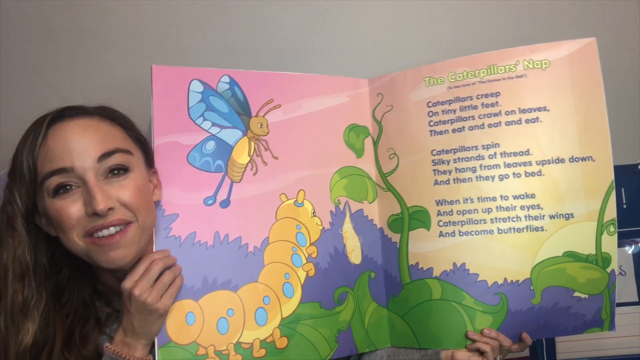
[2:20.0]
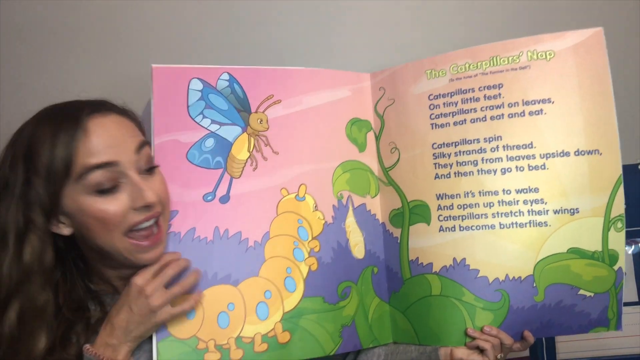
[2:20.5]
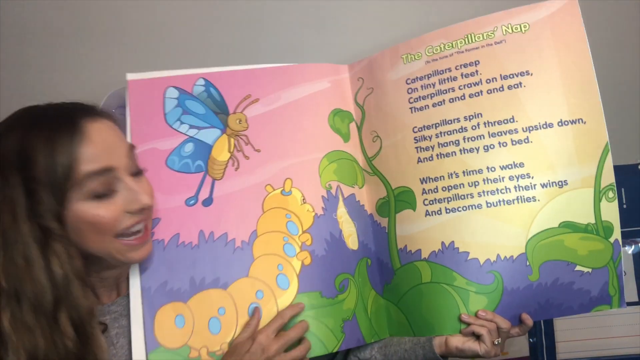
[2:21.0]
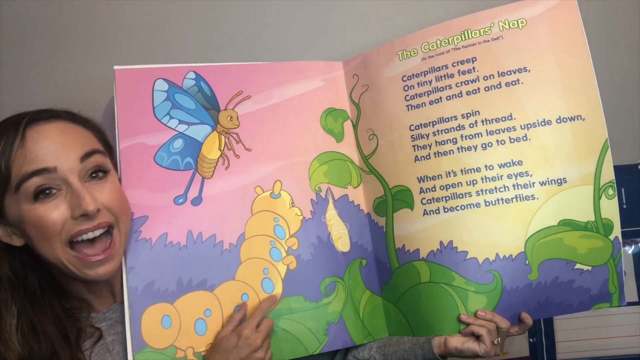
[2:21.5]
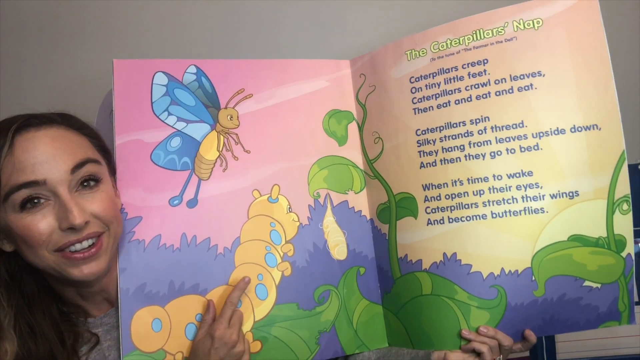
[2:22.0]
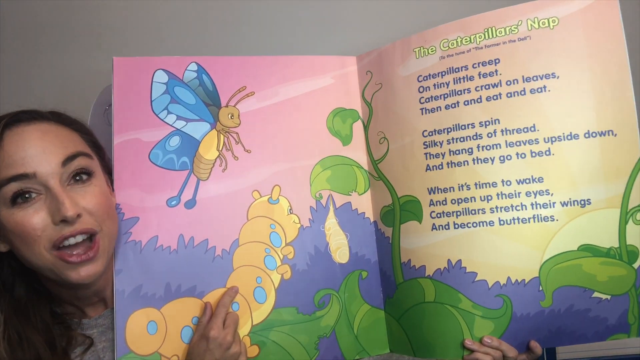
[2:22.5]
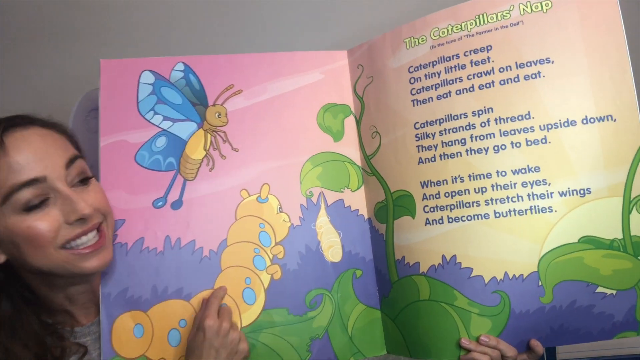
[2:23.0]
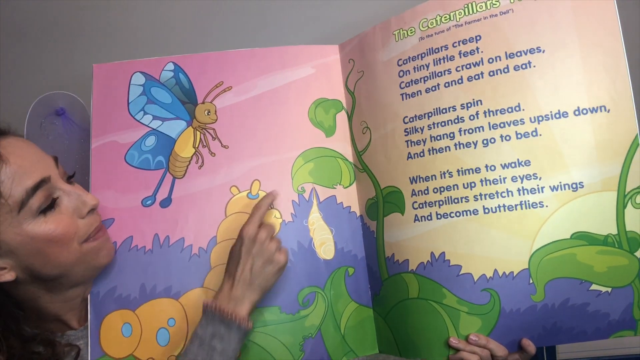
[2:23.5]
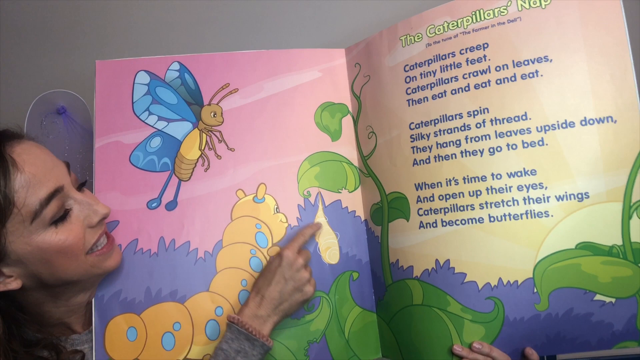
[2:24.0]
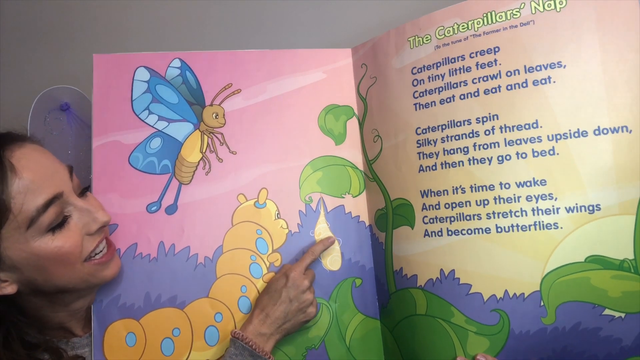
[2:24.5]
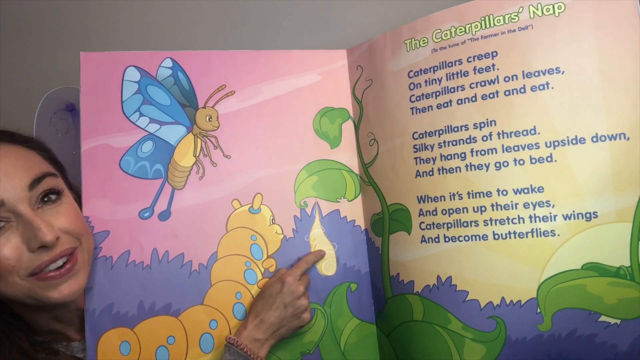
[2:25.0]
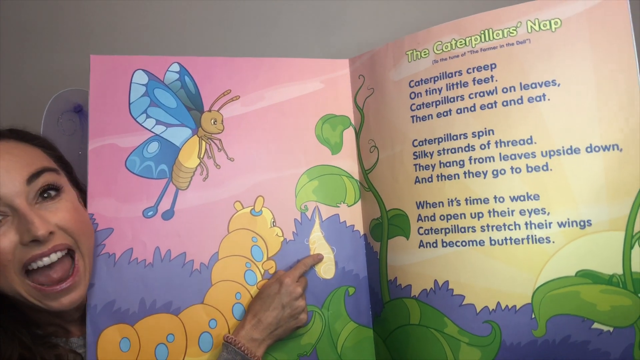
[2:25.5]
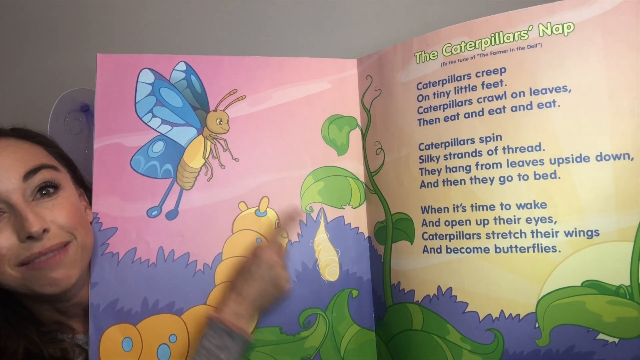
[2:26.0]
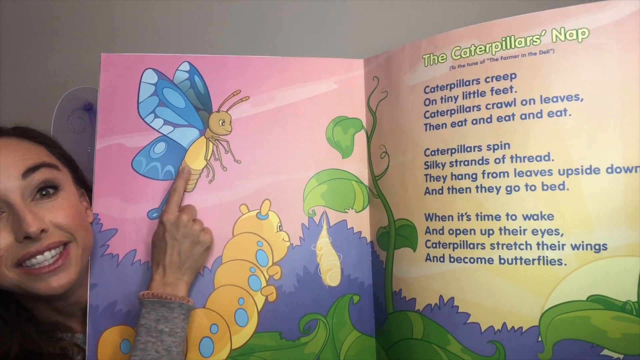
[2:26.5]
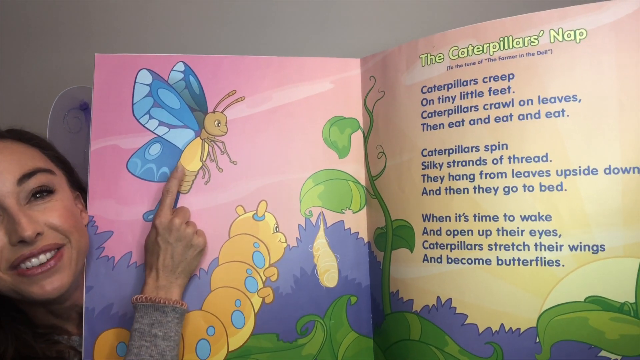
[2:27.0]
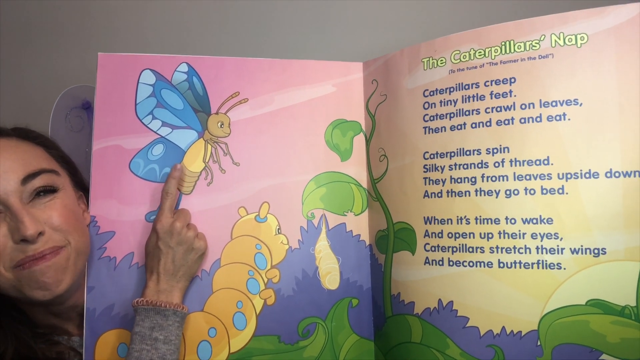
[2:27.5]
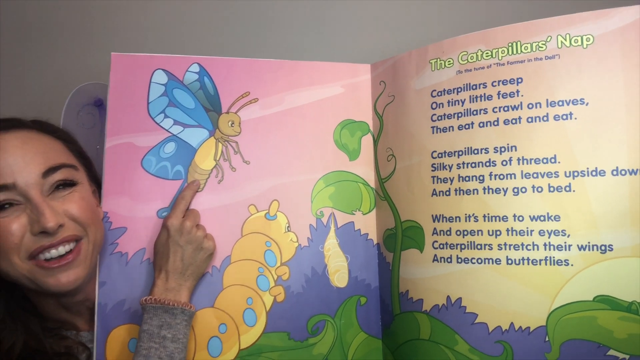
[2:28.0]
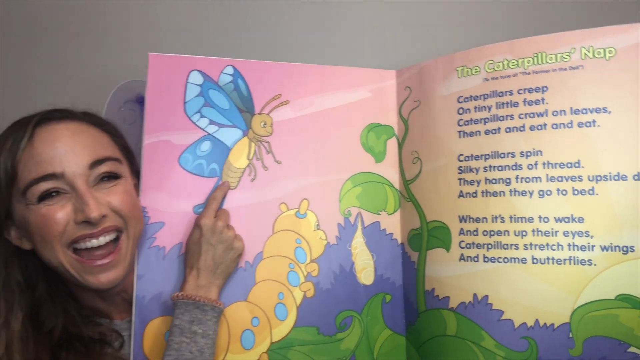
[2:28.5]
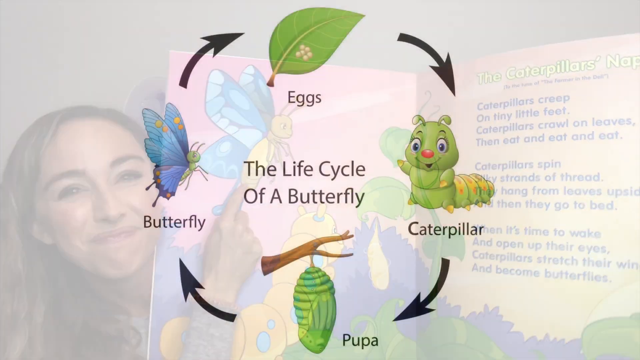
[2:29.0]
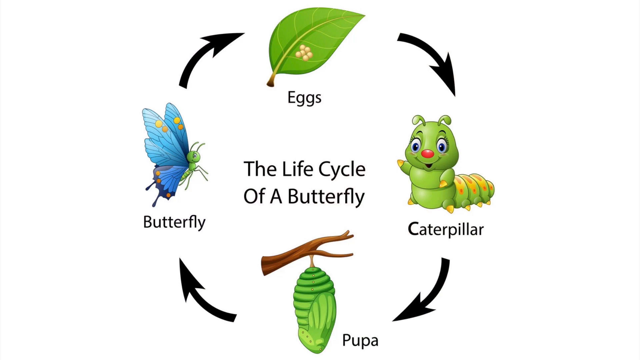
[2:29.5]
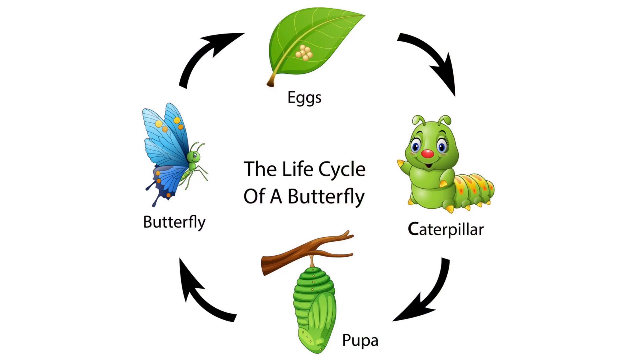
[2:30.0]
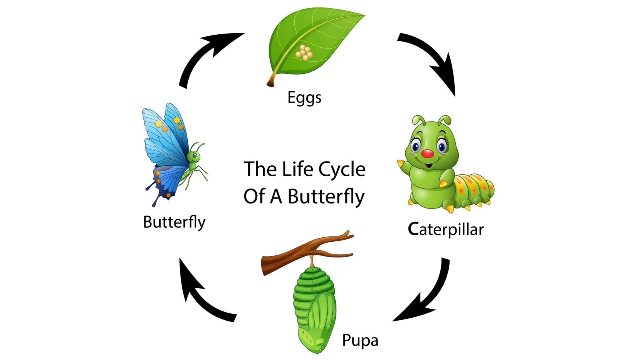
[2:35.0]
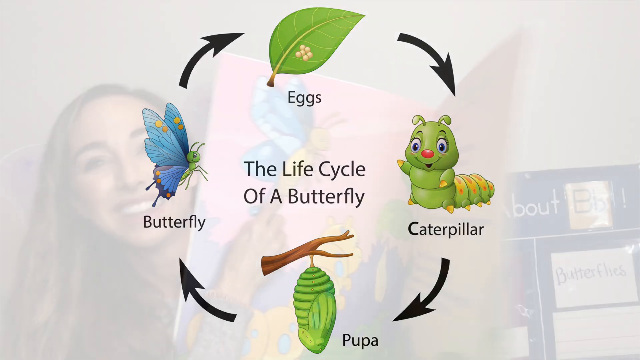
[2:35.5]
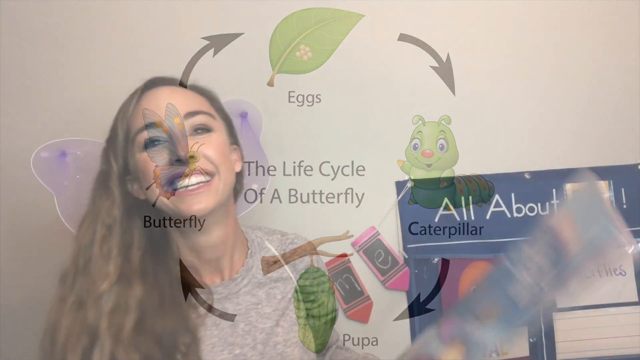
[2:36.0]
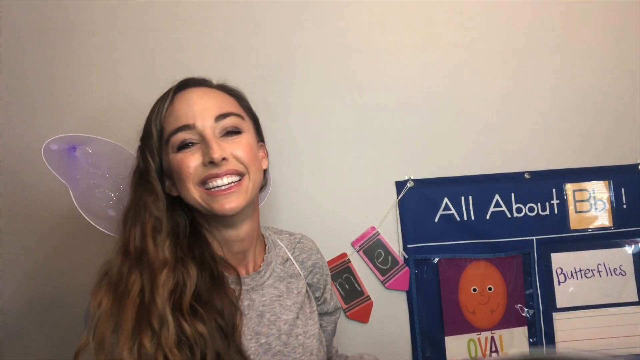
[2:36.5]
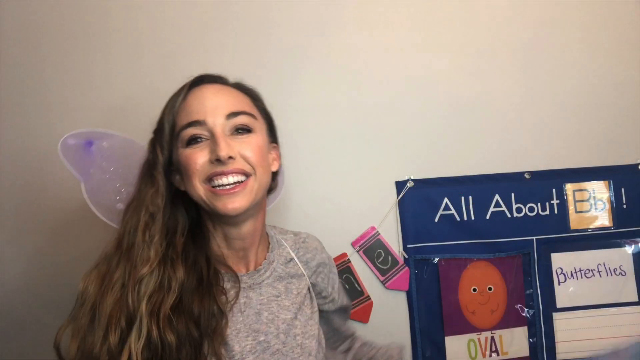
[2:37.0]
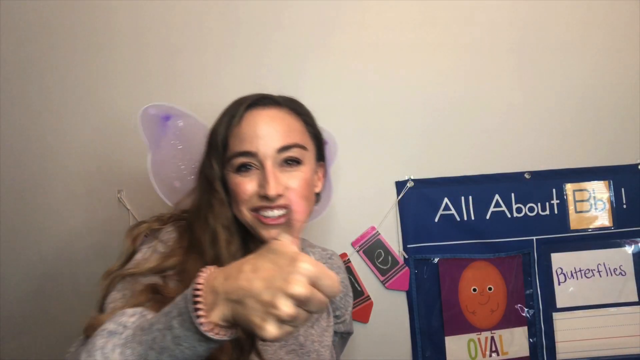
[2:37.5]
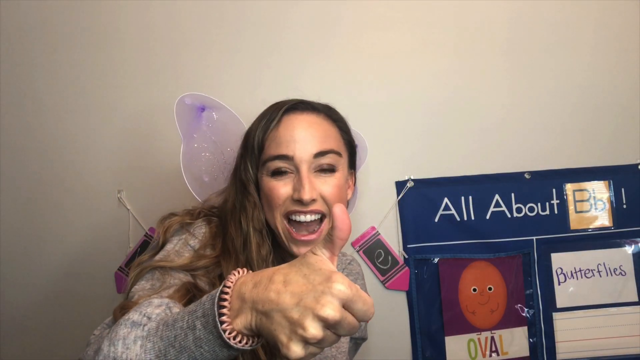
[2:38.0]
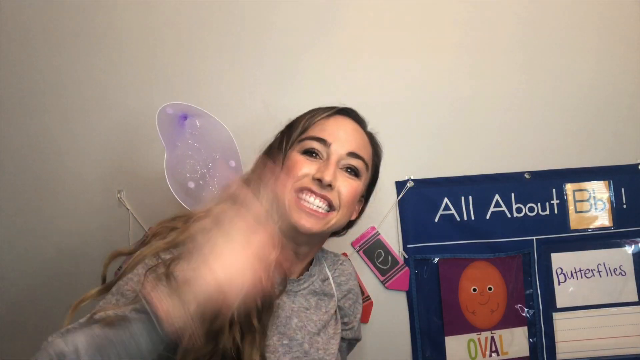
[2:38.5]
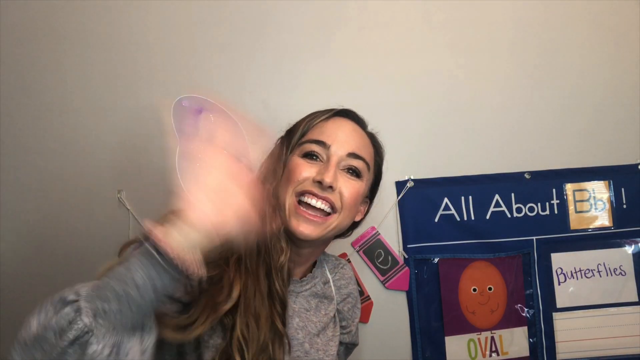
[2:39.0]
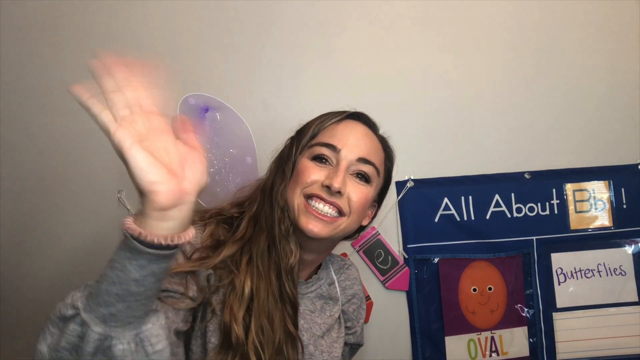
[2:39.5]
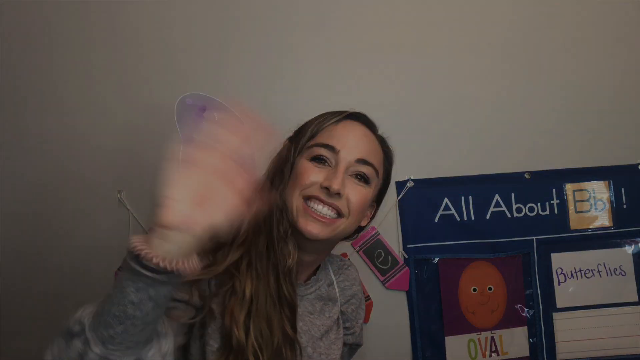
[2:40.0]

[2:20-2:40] She points out the different parts of the image again, apparently having been speaking the whole time. The view then changes to another image showing the life cycle of a butterfly: eggs on a leaf, an arrow to a weird-looking caterpillar, then to a pupa, another arrow to a blue butterfly with a green body, and then back to eggs. The video then returns to the woman, who gives a thumbs up and waves at the camera before the picture fades to black.